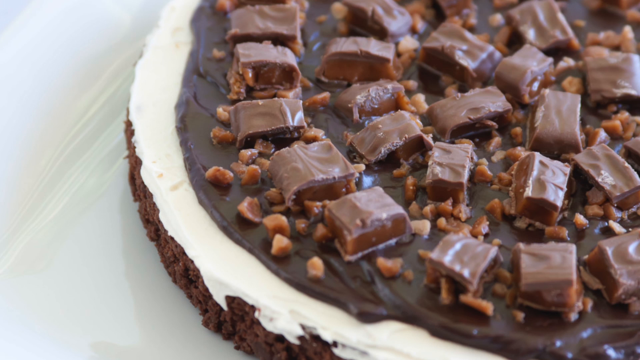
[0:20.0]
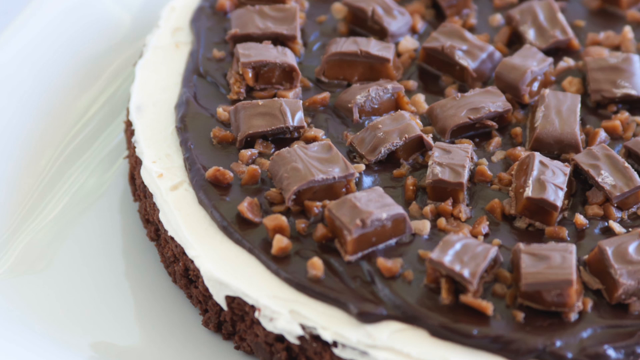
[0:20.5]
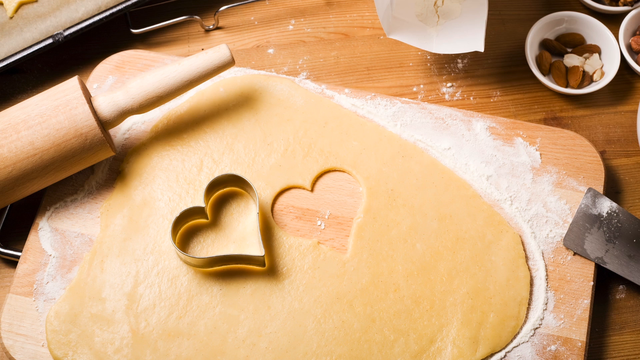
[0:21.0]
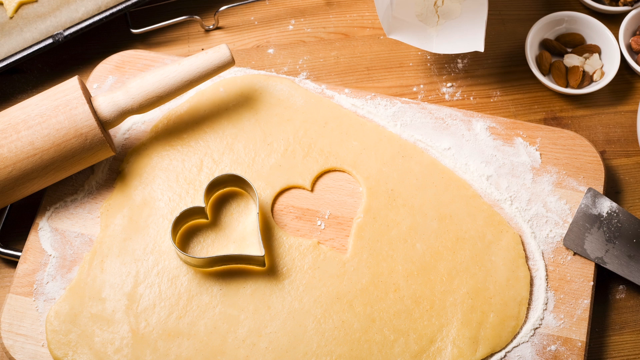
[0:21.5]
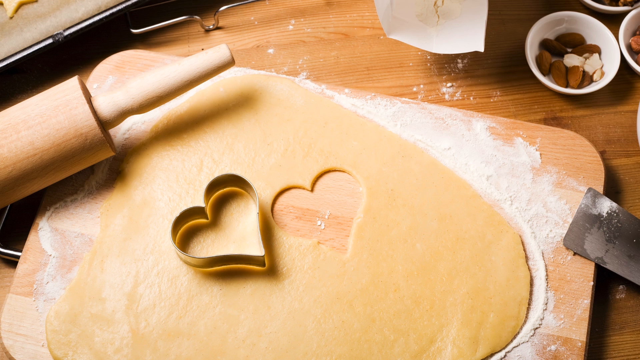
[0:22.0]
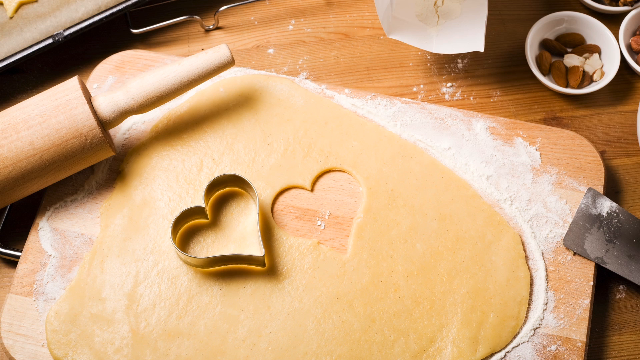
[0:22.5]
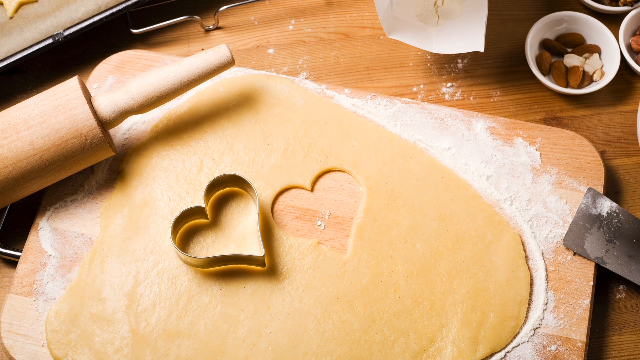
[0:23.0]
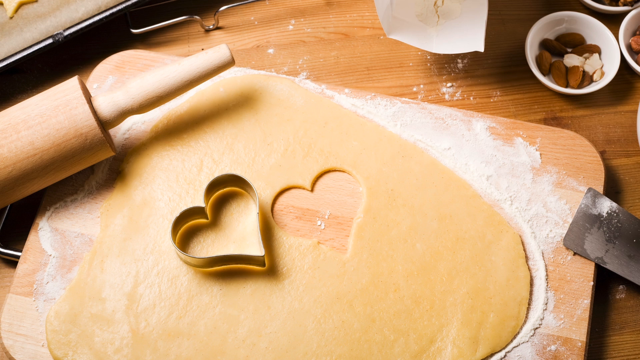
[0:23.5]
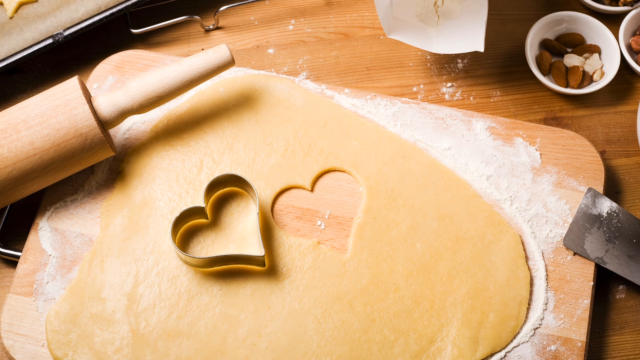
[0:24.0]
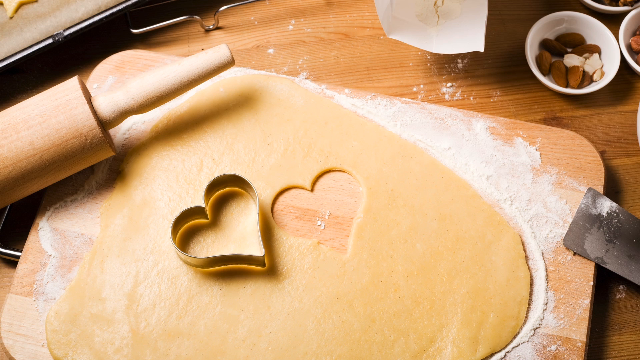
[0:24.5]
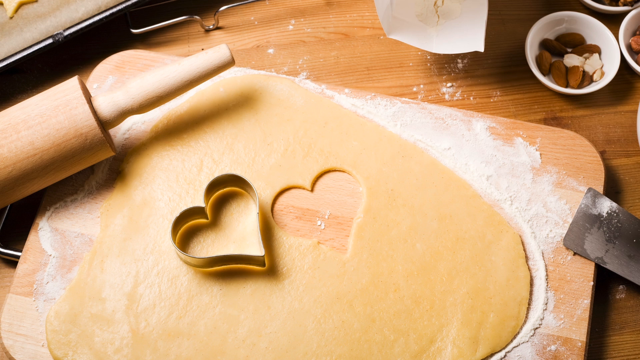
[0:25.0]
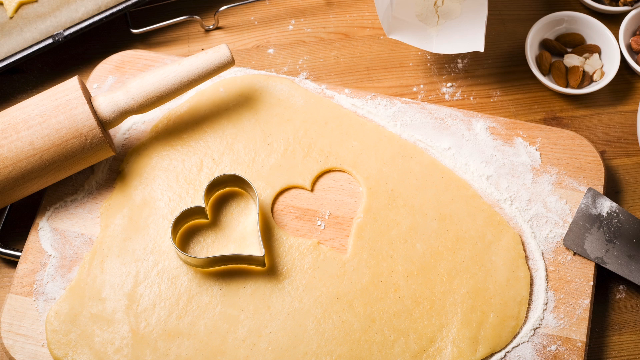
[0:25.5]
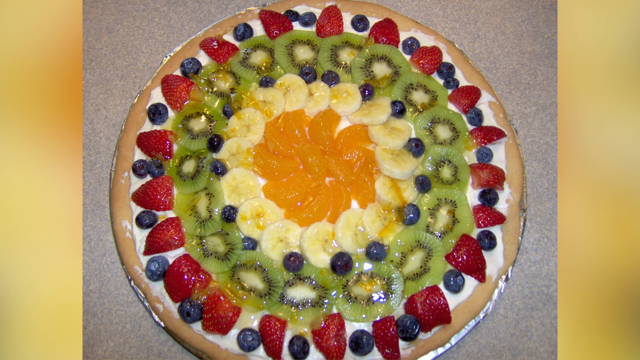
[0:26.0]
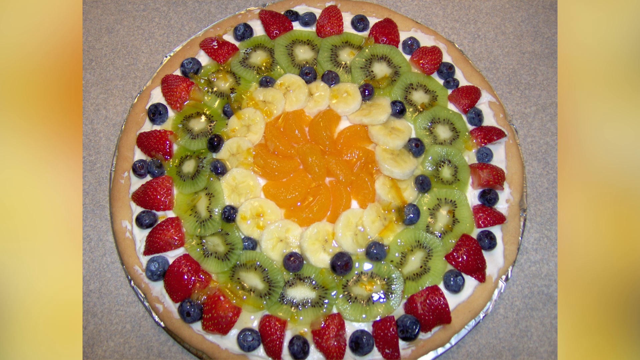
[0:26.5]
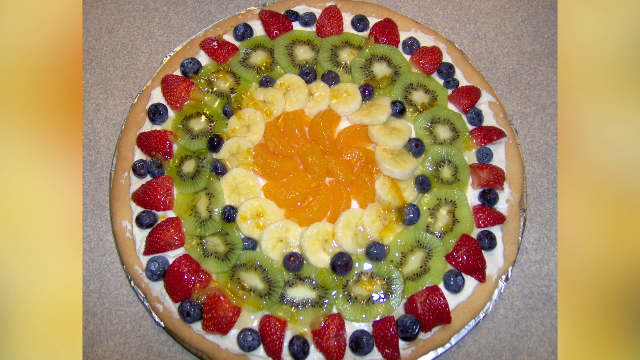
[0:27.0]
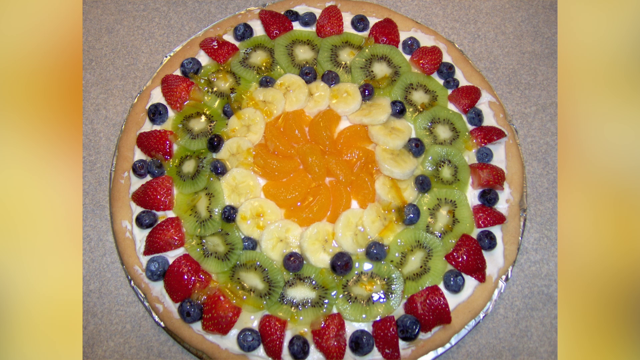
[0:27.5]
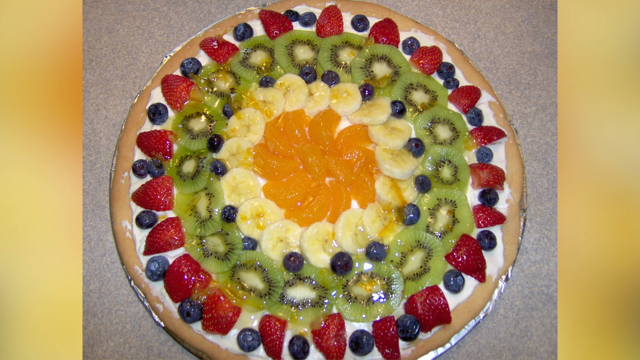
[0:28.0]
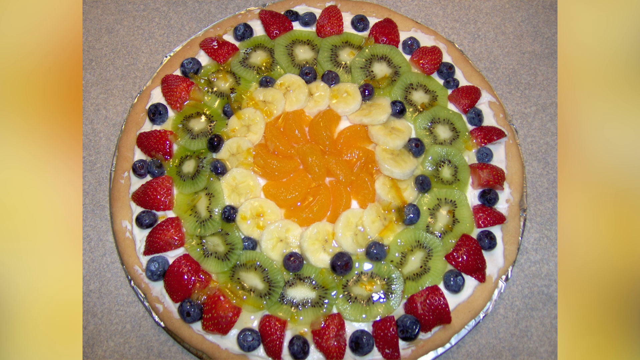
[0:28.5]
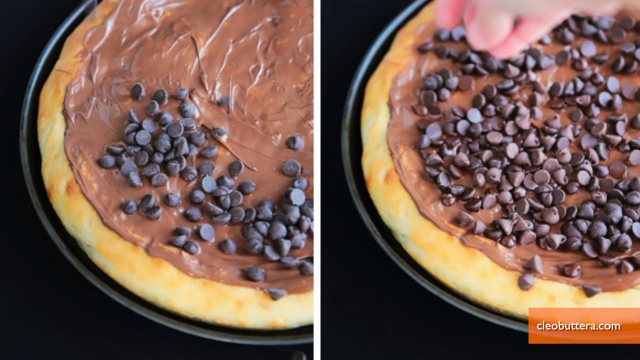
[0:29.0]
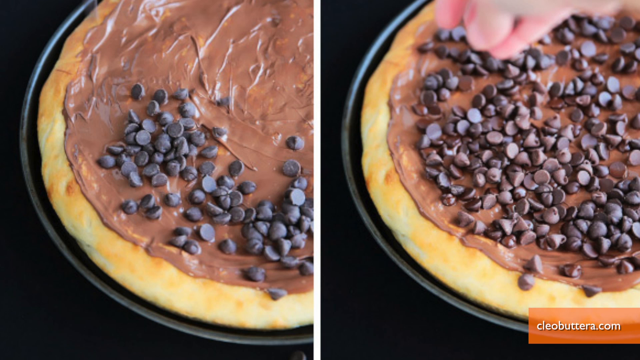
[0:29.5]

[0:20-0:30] A dessert shows cakey layers and another layer of white, with chocolate chunks on top along with peanuts and syrup, in a circular shape. A heart shape is cut out of dough with a rolling pin, with flour visible. Next comes a fruit decoration with kiwi and chocolate chips on a pie. The desserts shown are sweet treats.